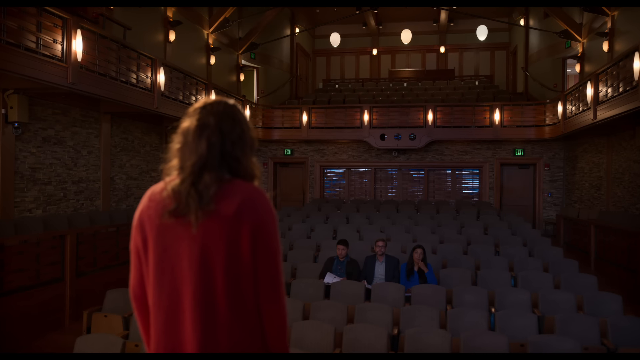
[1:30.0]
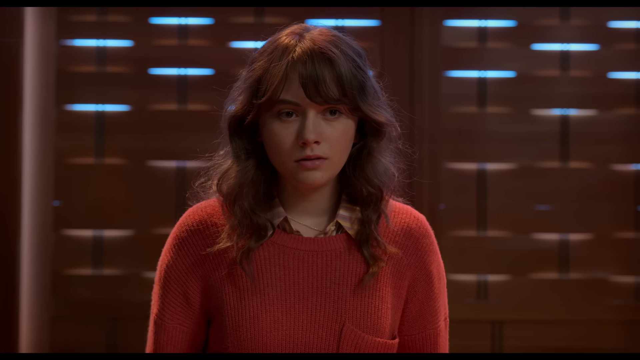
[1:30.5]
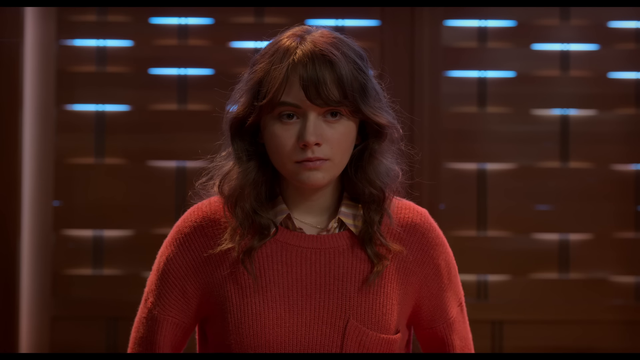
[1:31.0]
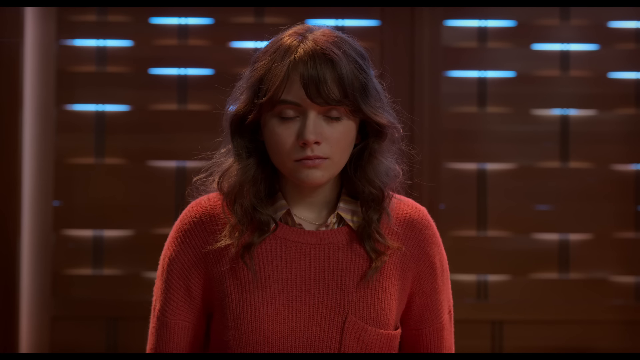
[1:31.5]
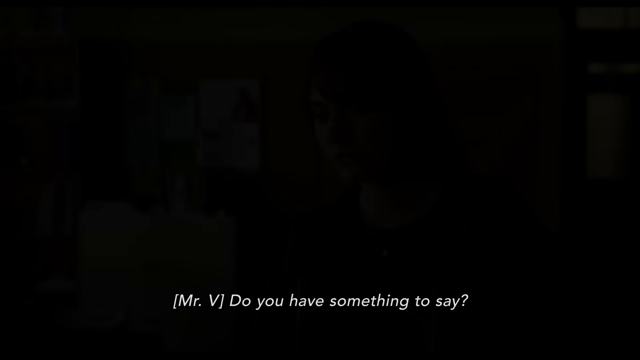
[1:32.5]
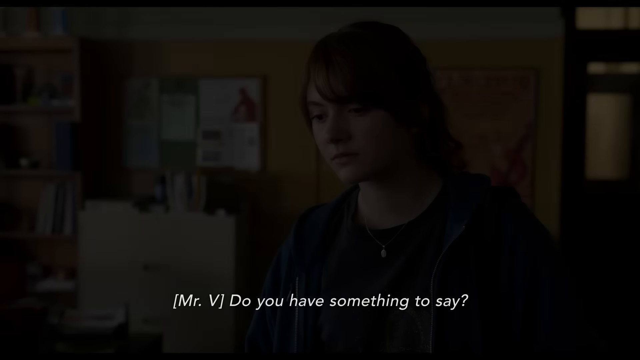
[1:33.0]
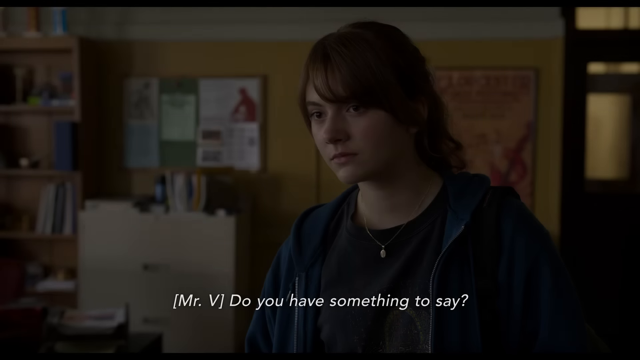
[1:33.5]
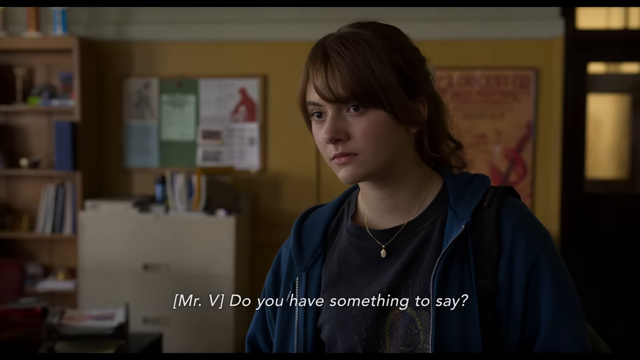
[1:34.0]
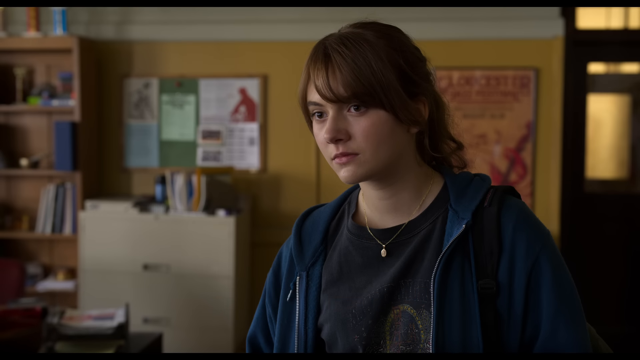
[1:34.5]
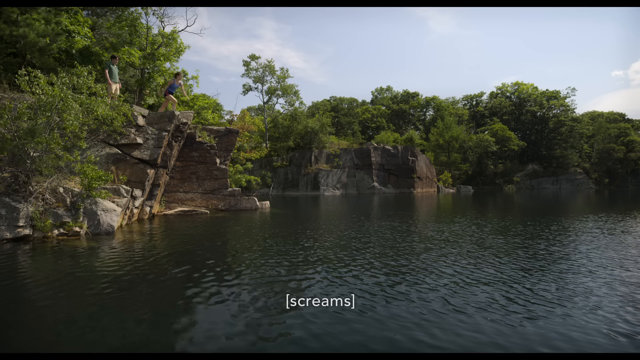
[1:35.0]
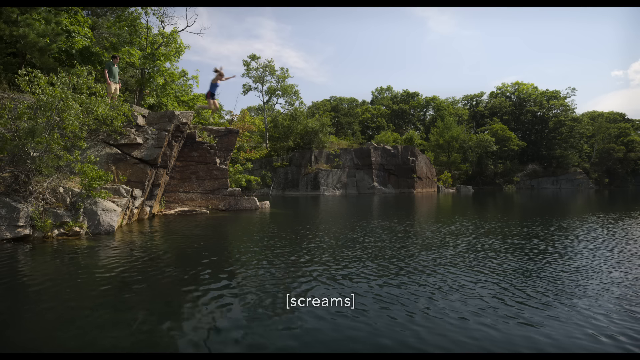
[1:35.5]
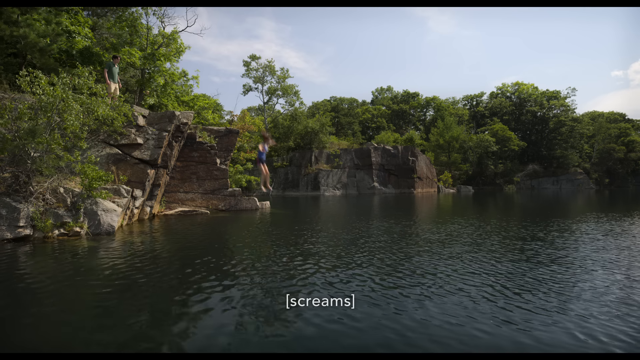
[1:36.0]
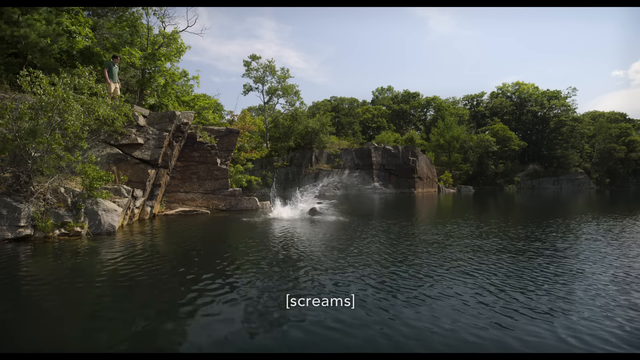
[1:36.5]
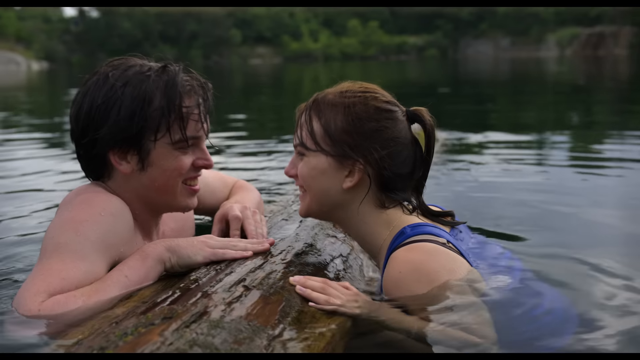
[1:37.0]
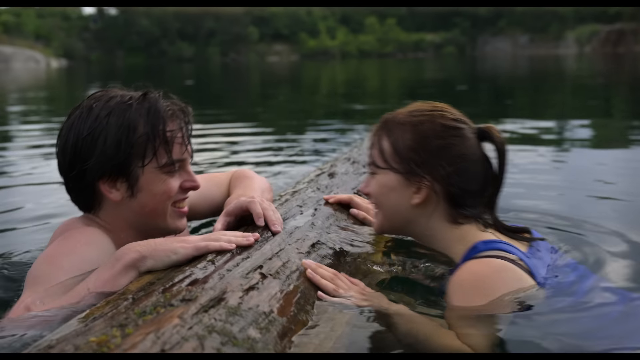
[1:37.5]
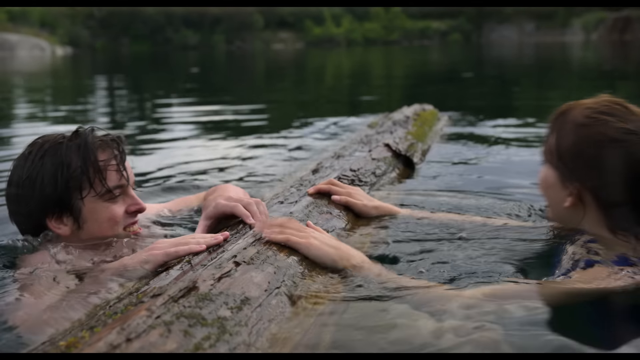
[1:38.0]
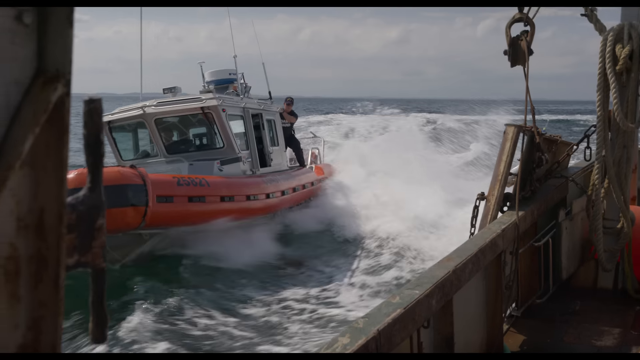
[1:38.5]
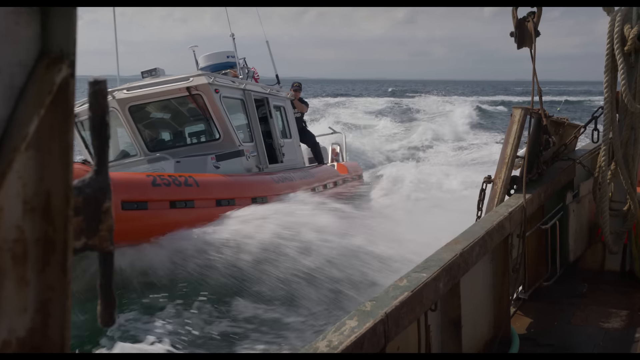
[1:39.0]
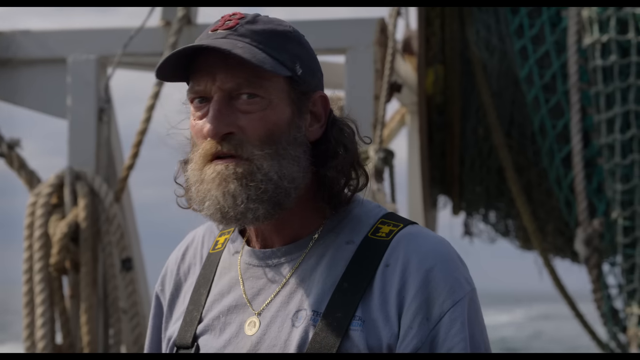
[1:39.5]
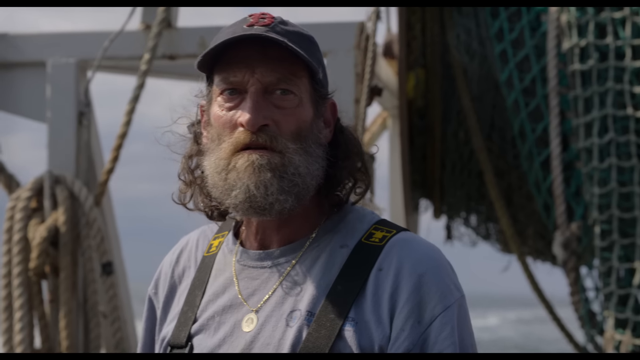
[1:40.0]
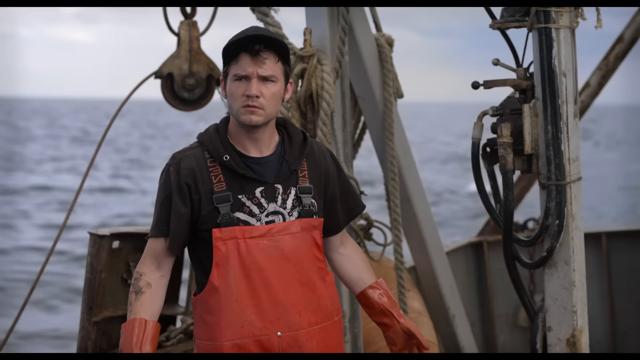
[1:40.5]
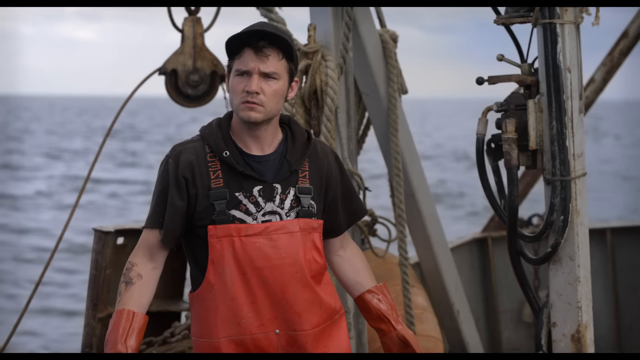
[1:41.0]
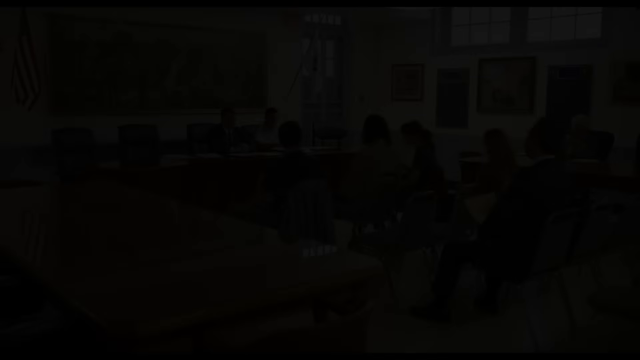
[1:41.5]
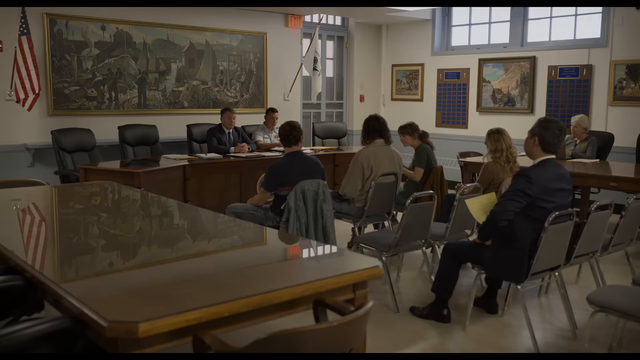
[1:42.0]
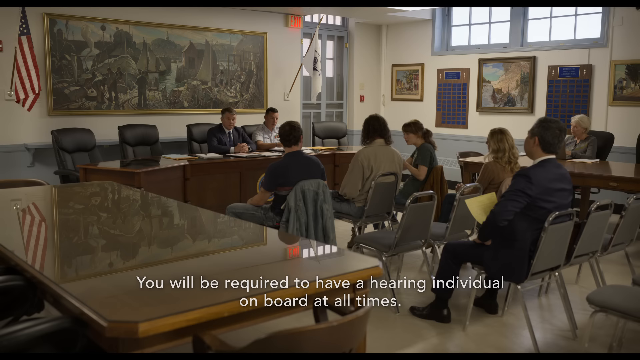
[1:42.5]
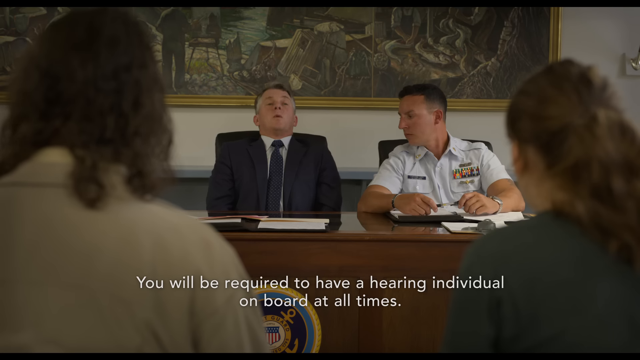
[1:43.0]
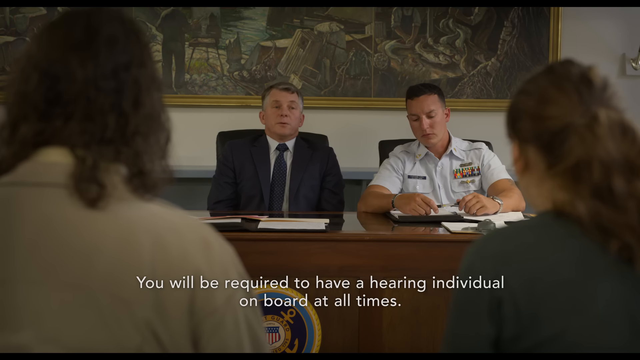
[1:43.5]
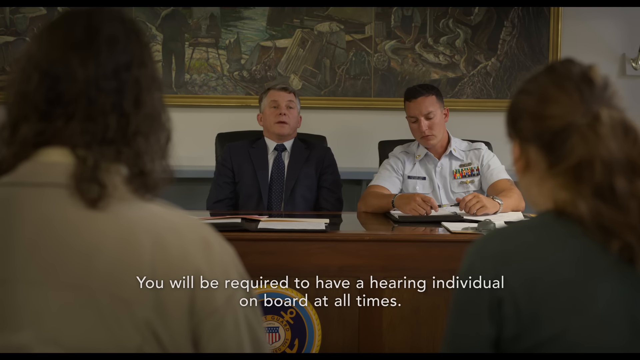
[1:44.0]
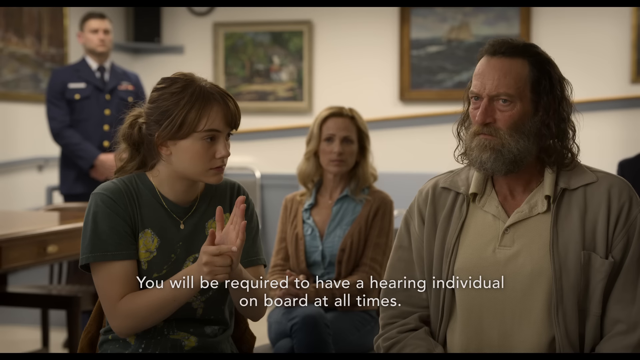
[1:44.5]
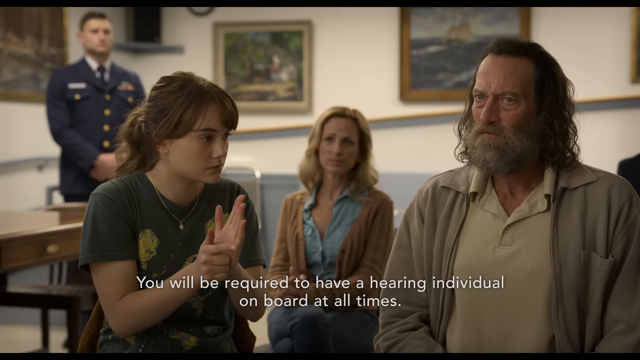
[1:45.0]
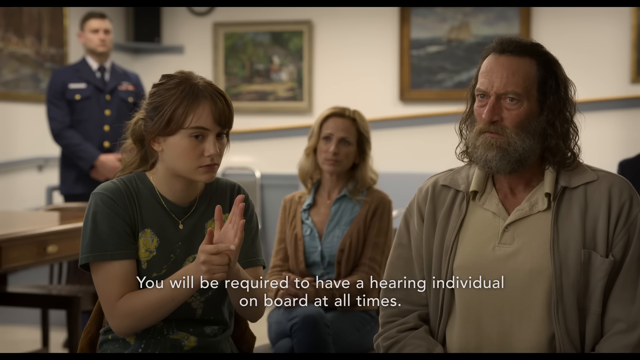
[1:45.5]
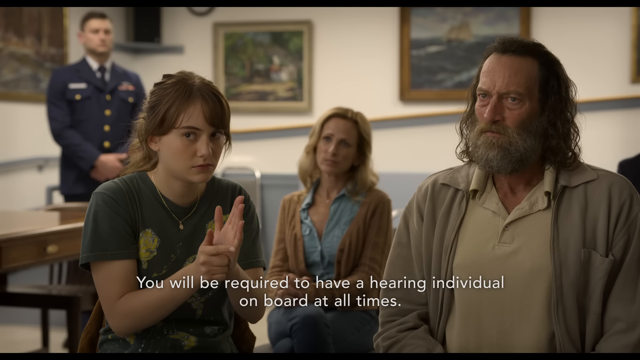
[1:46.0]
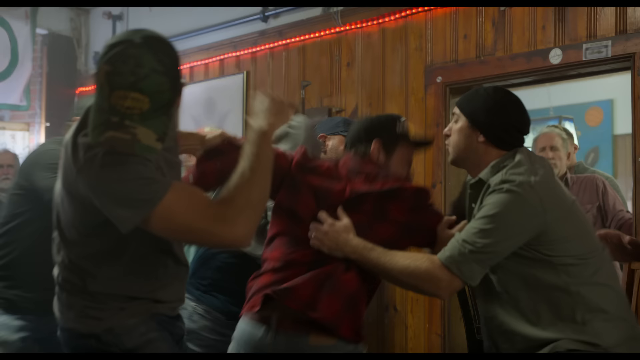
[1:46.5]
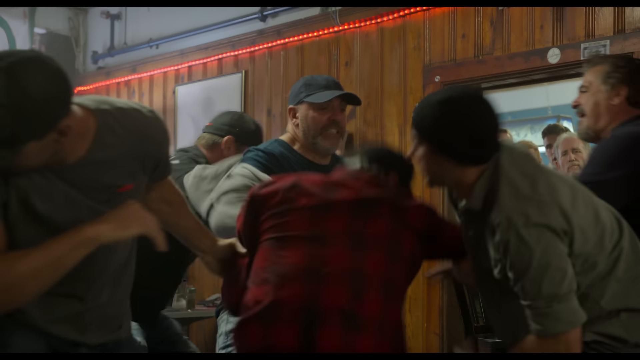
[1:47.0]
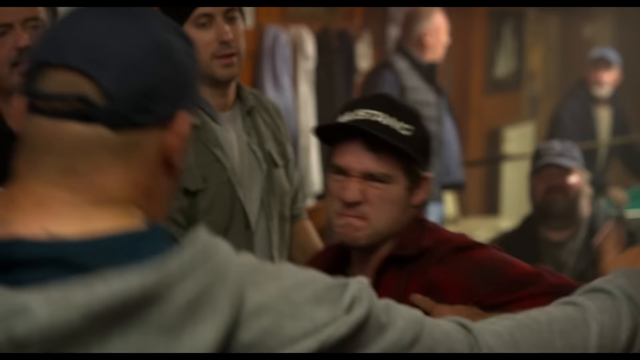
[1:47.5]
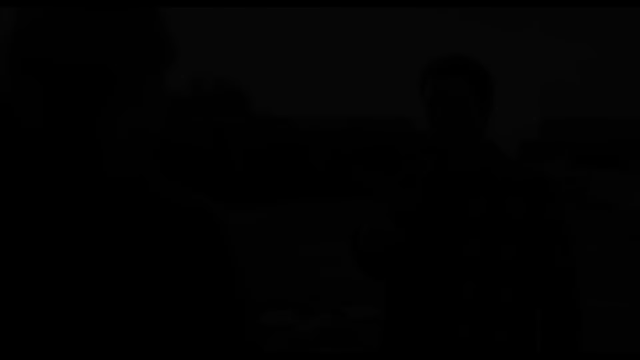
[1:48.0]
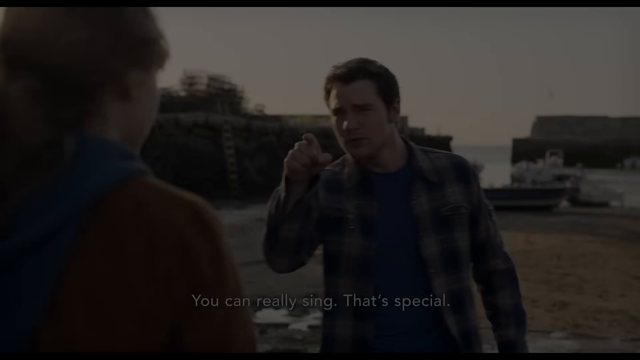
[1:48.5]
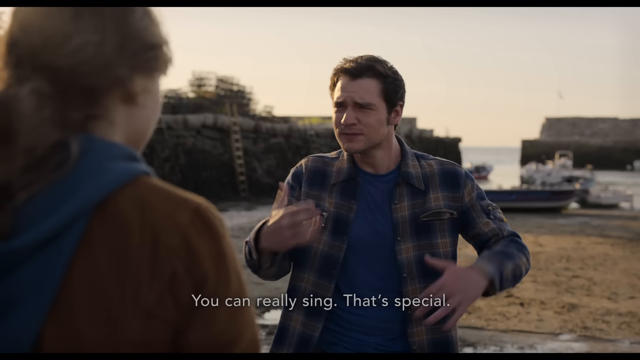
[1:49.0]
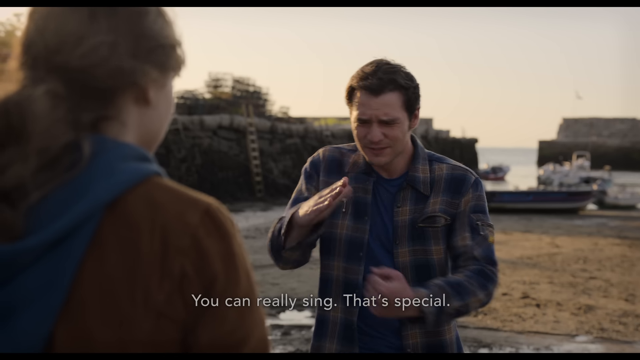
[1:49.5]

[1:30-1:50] What looks like the teenage girl auditioning takes place inside a massive theater, with only three people seated in one of the middle rows of the otherwise empty auditorium. She wears a red sweater, her back to the camera, facing the seating. A close-up shows her closing her eyes. The scene switches to her in what looks like a classroom with a bookcase to her left, then to the teenage girl jumping off a cliff into water in a natural setting with what are possibly ruins of structures. The two teenagers float in the lake holding the log between them, the shirtless male on the left and the girl in a blue shirt on the right, smiling and giggling at each other as they rest their hands on the floating log.